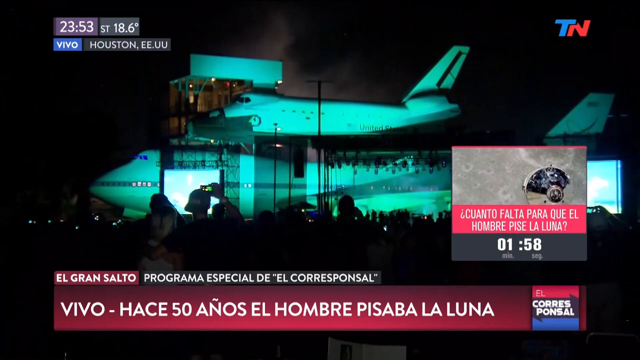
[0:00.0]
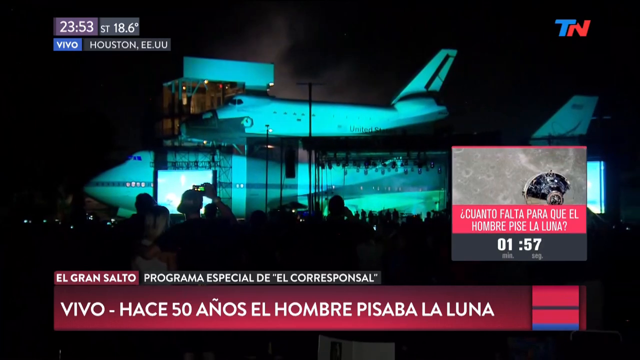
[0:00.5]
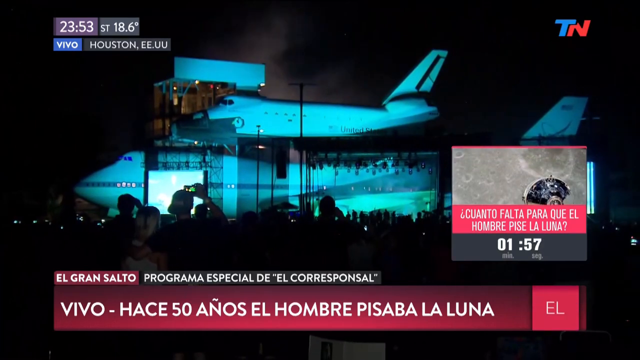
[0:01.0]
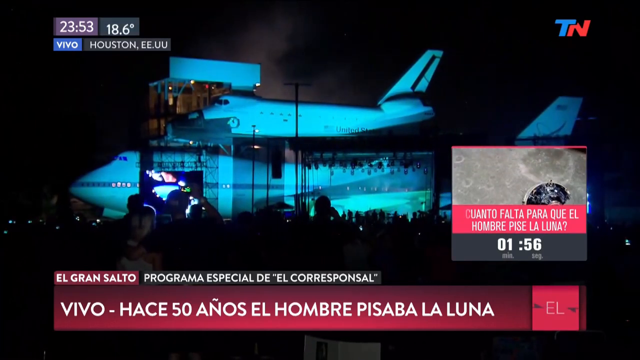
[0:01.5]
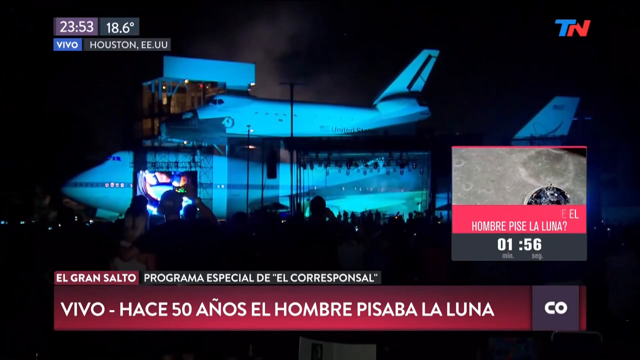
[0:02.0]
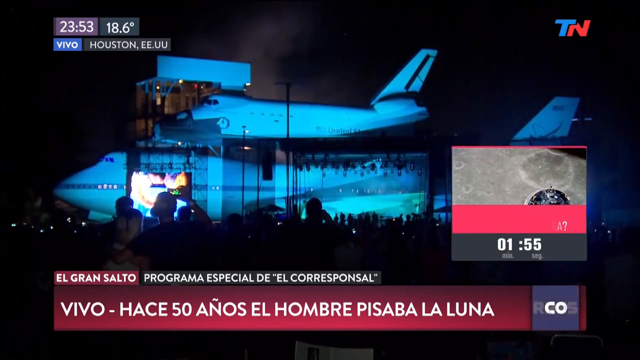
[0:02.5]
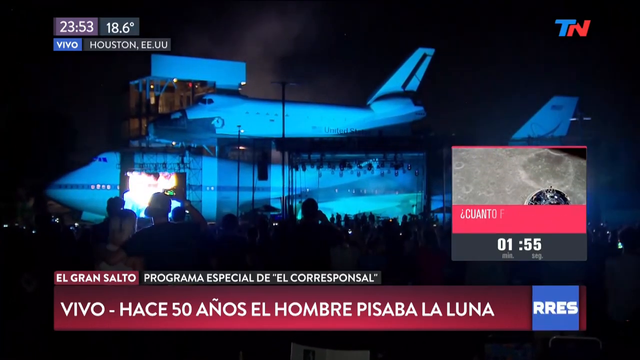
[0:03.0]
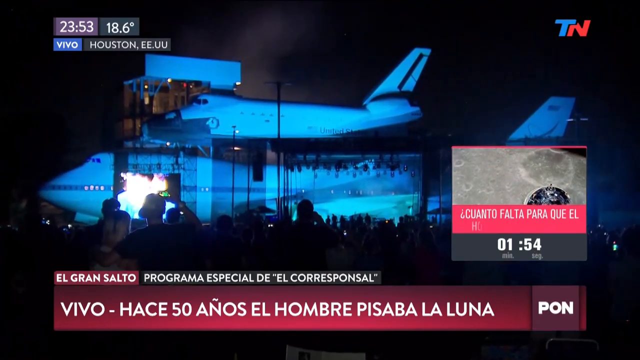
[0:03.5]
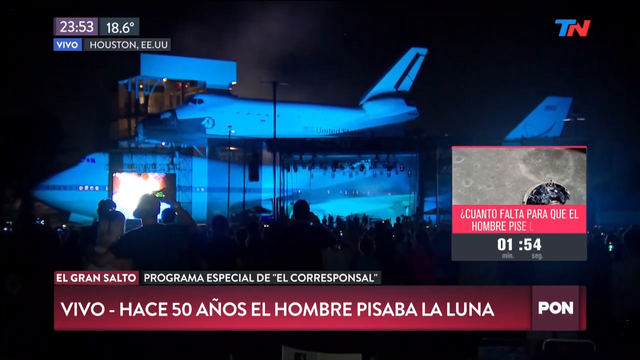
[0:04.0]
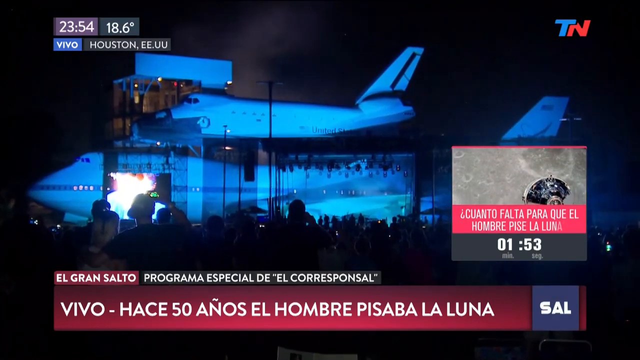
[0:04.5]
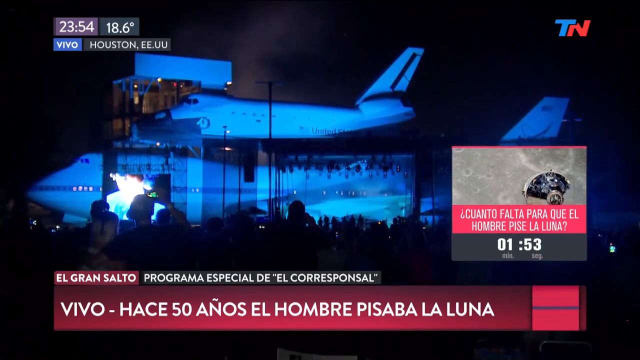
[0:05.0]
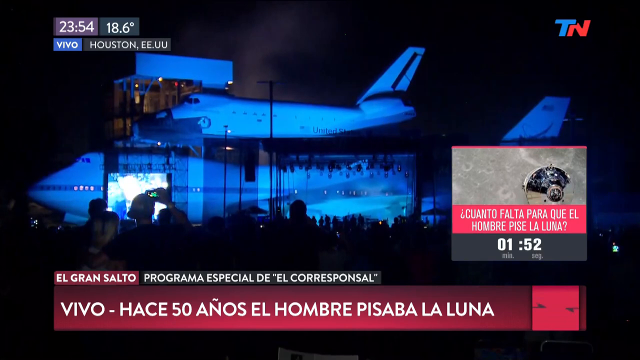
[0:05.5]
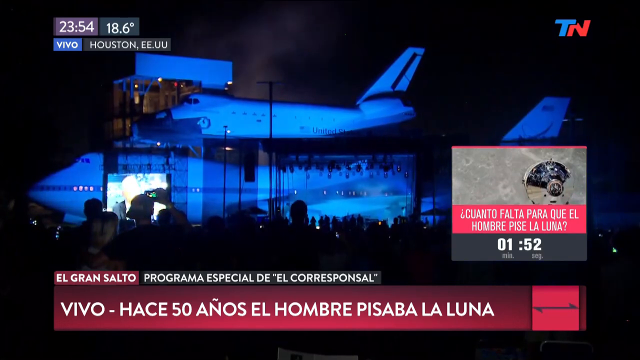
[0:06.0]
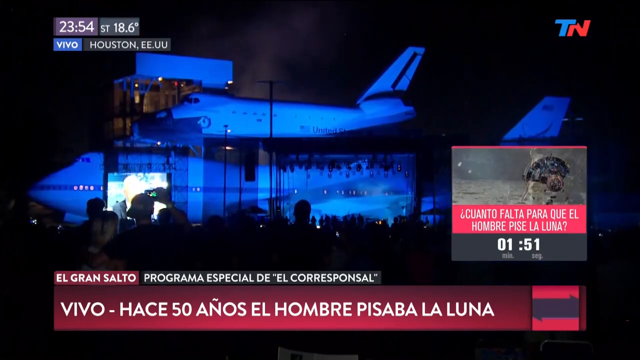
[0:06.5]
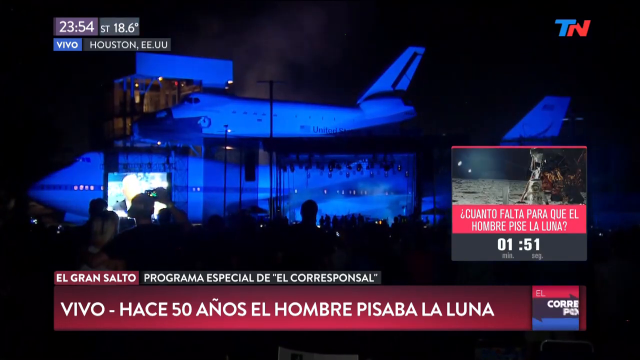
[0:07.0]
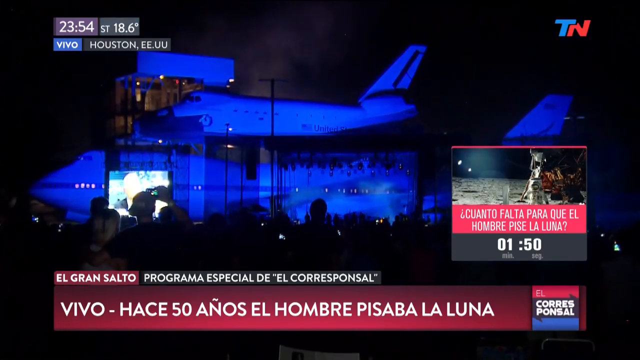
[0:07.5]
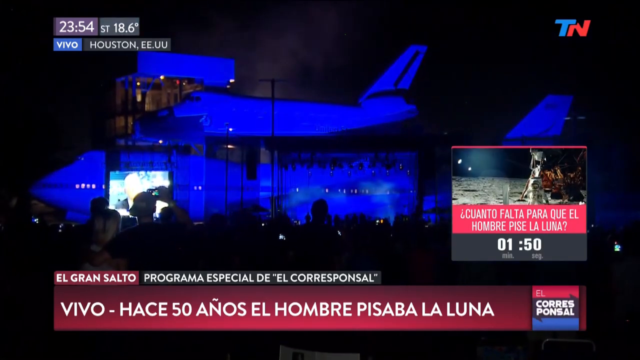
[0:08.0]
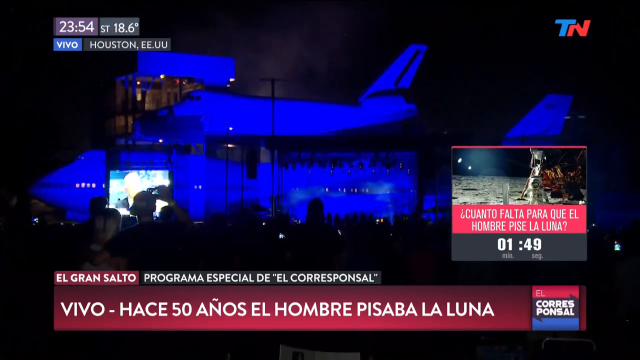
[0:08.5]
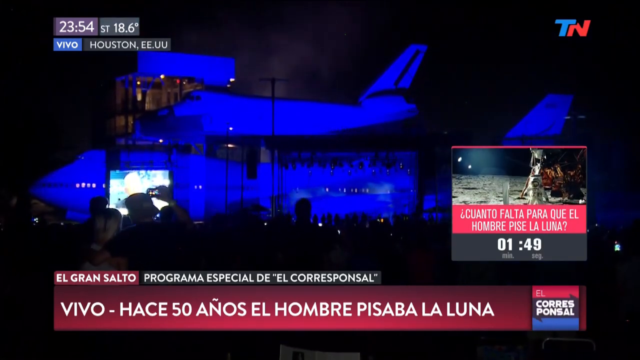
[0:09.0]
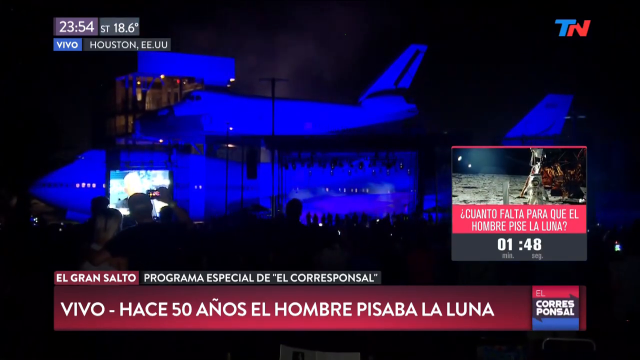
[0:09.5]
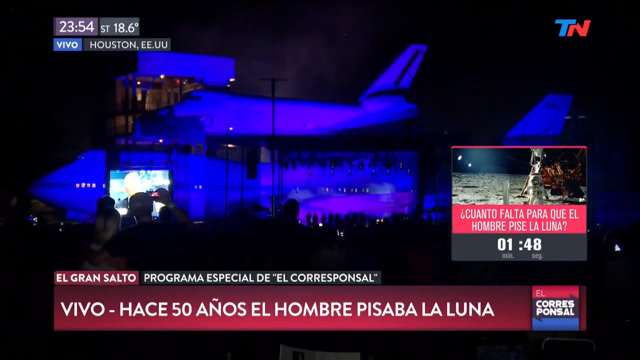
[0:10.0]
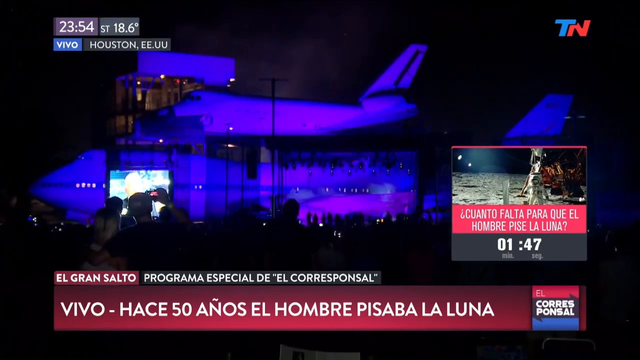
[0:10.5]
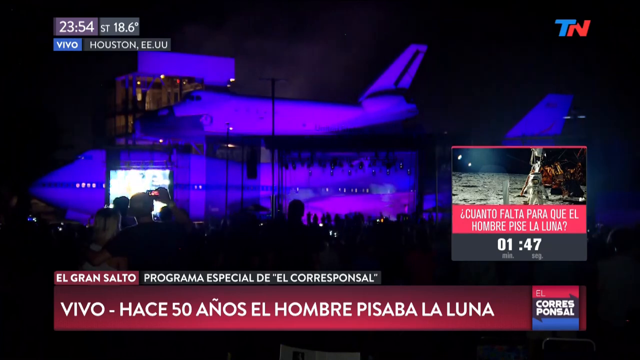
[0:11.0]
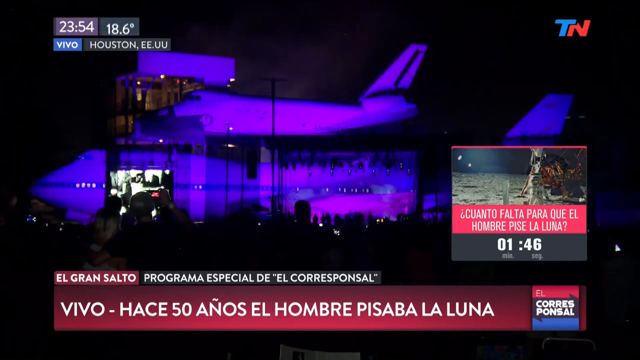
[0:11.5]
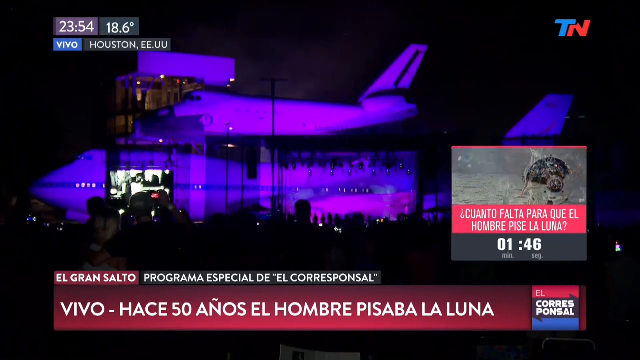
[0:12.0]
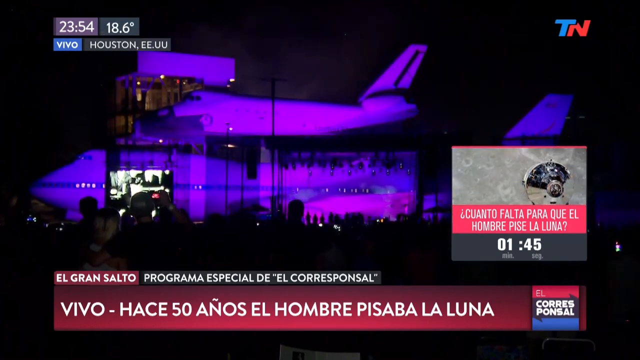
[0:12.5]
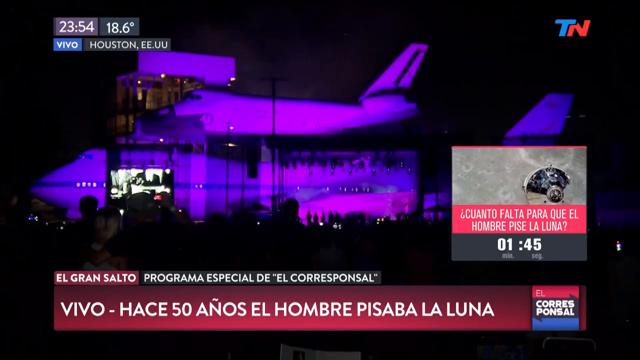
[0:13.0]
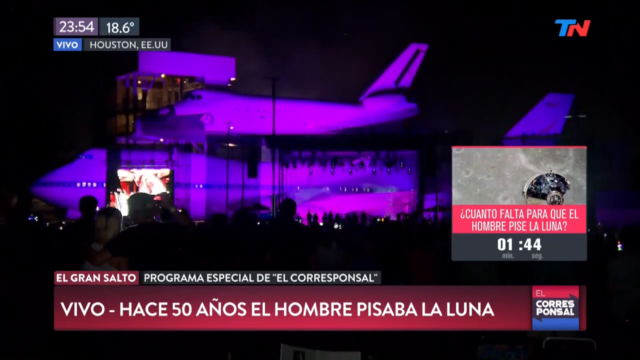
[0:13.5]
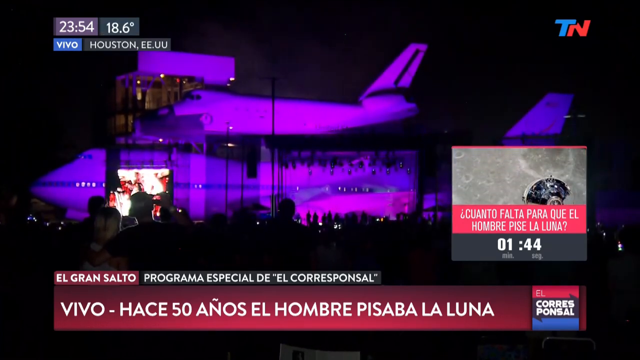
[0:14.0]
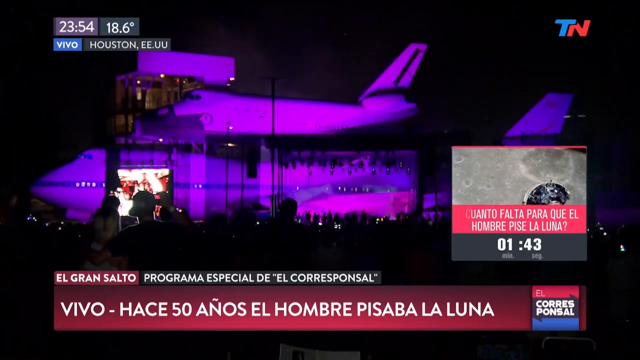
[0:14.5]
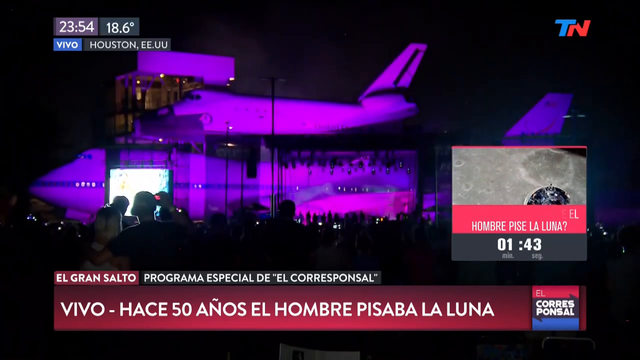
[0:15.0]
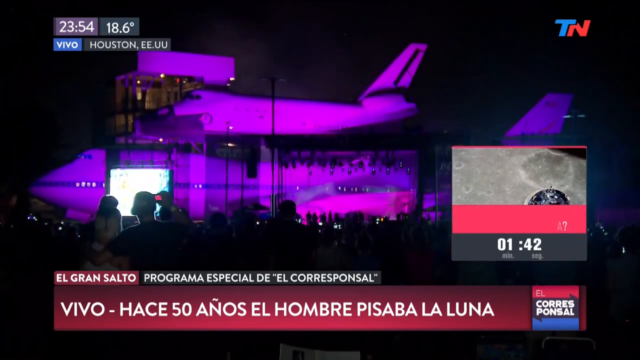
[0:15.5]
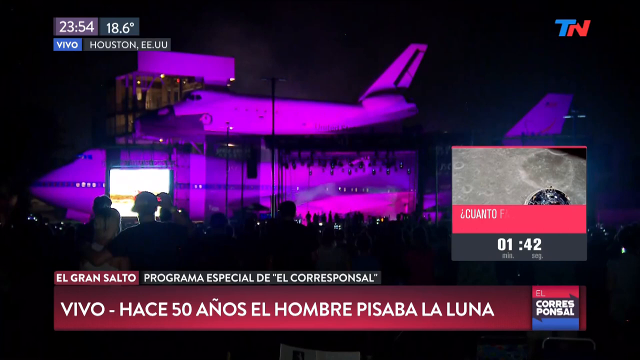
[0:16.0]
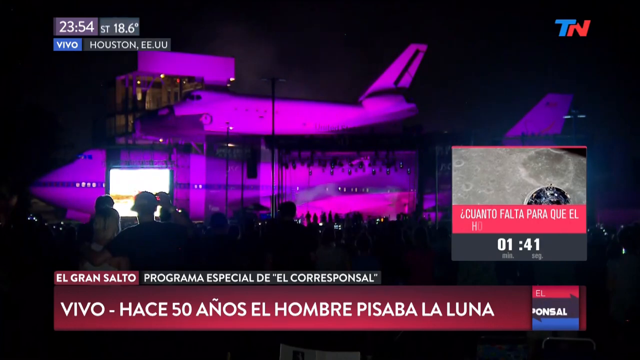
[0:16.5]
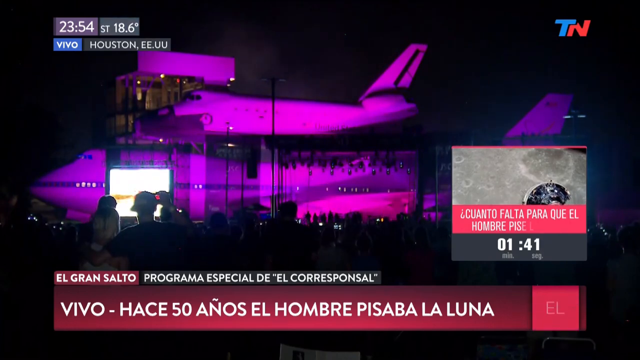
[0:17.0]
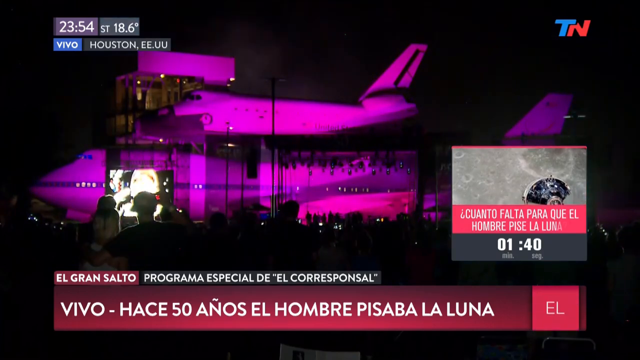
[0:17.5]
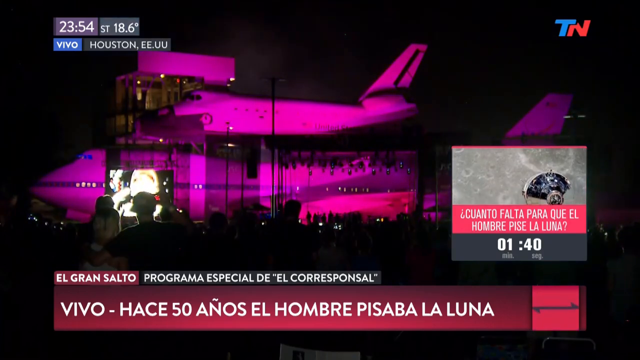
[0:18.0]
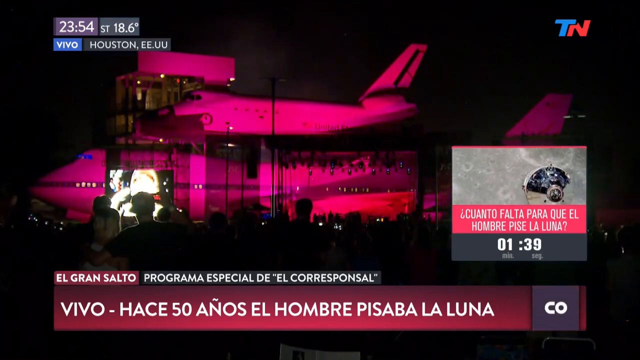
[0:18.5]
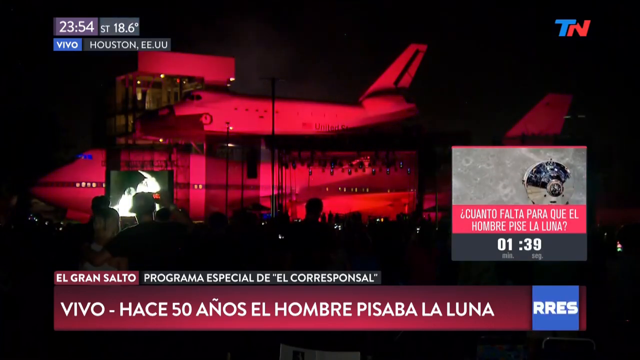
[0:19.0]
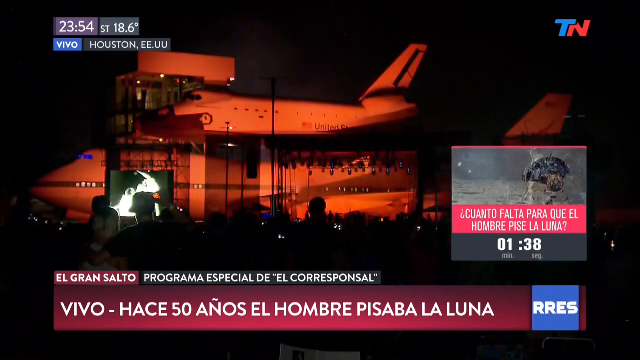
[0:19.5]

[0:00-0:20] A news channel broadcast plays, with on-screen text that looks like it might be in Spanish. An image of a plane is shown, with text apparently about Houston. There also appears to be an image of a spaceship and something about a moon, and a countdown is on screen. Many spectators are outside, and it is nighttime with a dark, black sky. "TN" appears in the top right corner of the screen. It looks like an airplane, and a small box shows what seems to be some type of satellite on the moon. A green light bounces off the plane.